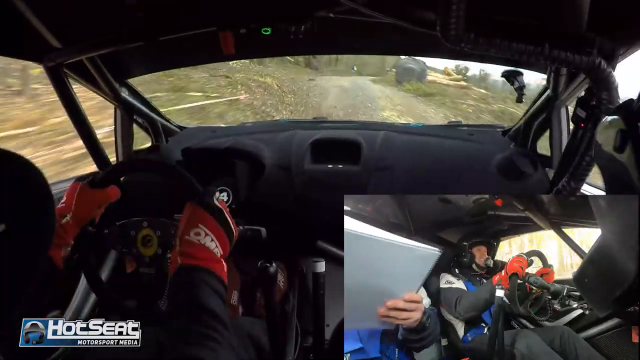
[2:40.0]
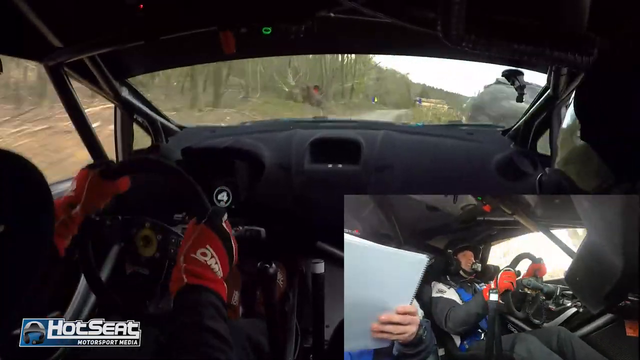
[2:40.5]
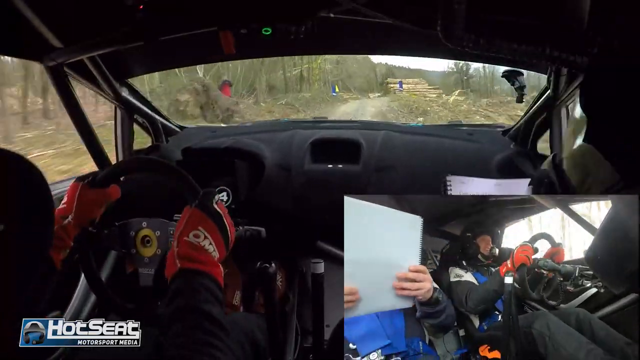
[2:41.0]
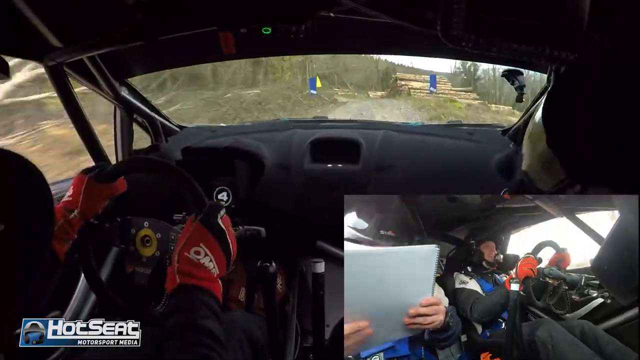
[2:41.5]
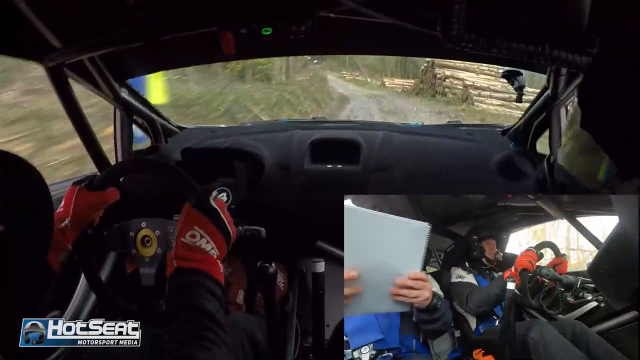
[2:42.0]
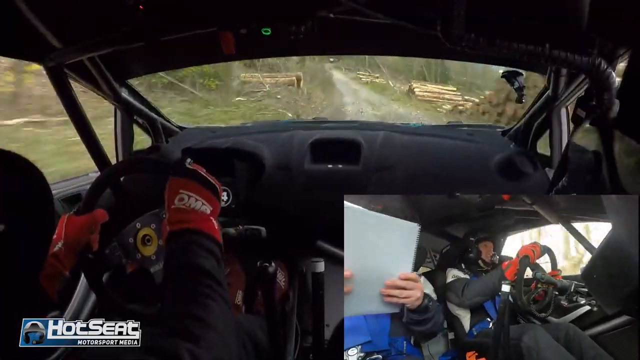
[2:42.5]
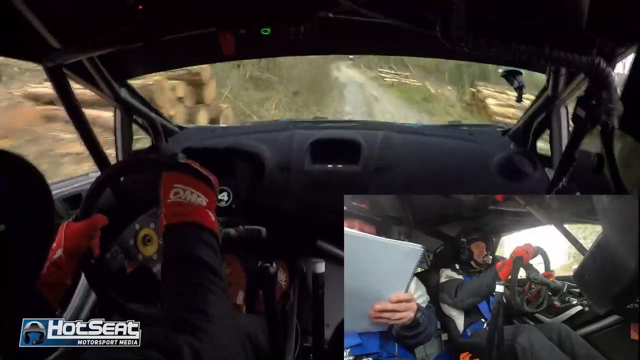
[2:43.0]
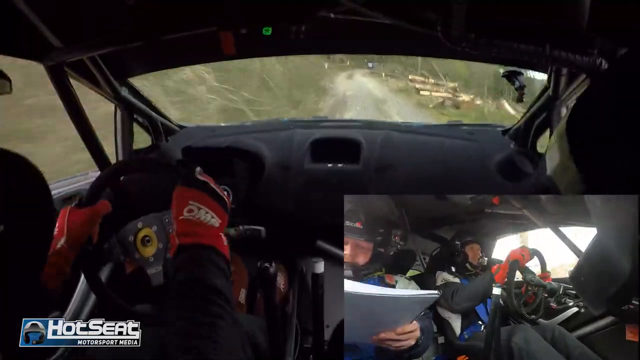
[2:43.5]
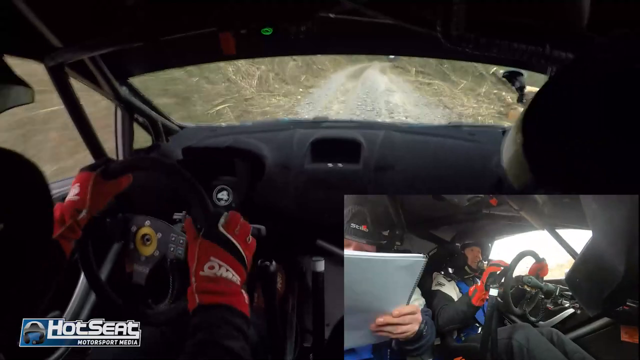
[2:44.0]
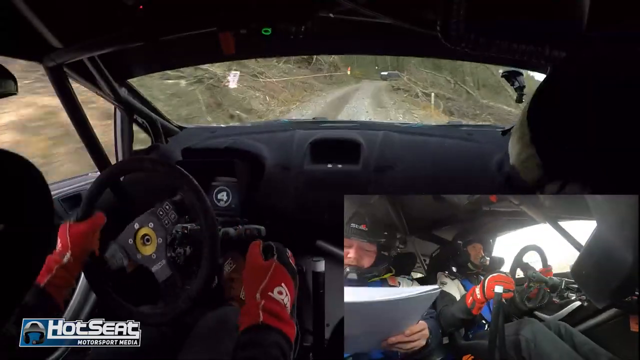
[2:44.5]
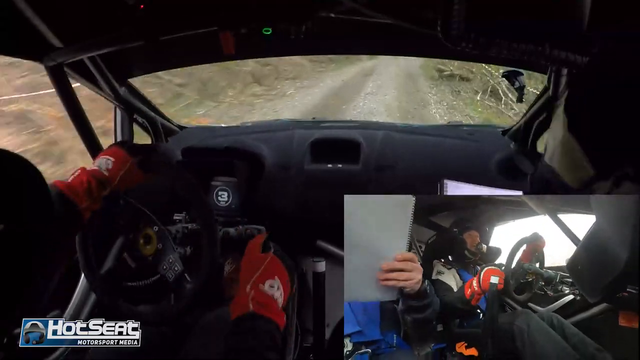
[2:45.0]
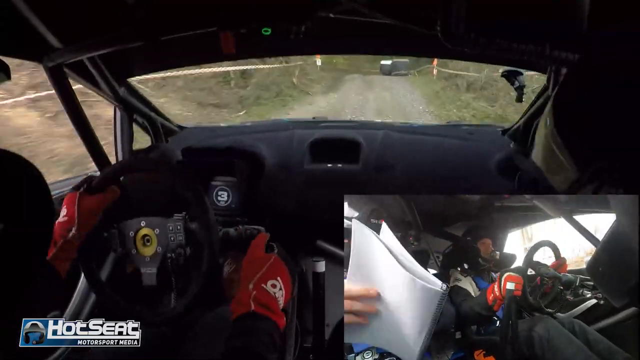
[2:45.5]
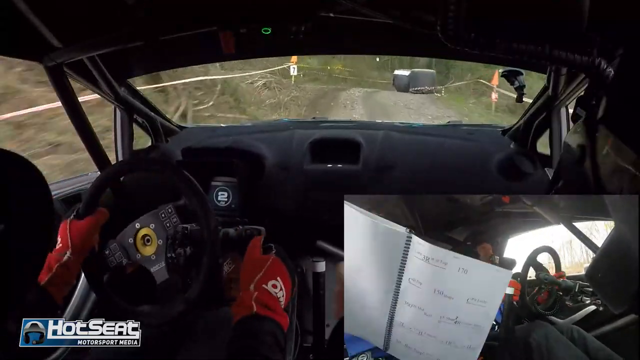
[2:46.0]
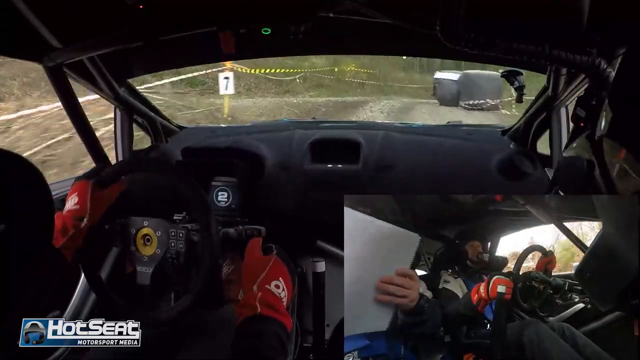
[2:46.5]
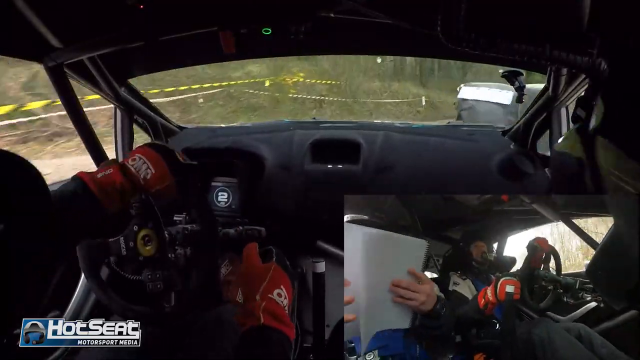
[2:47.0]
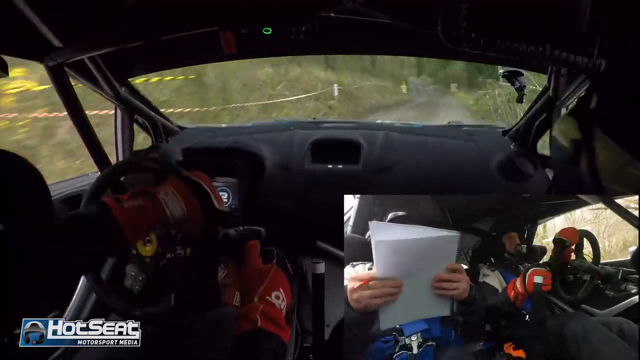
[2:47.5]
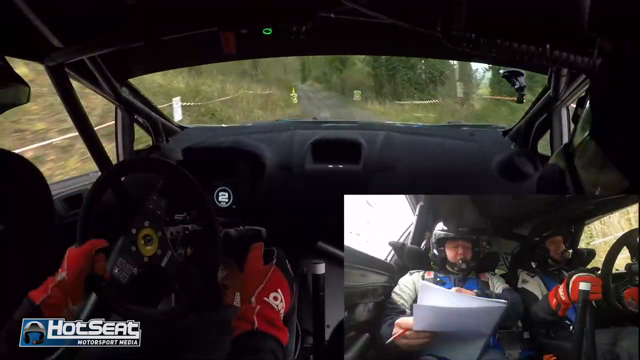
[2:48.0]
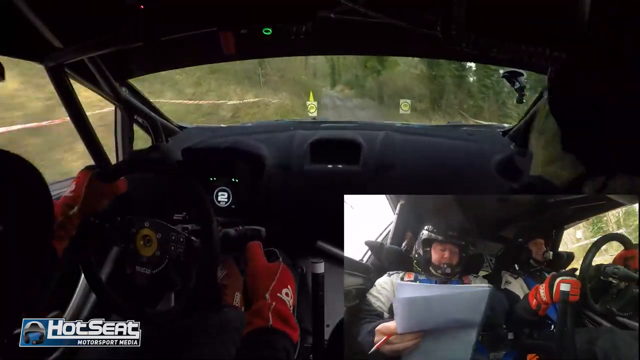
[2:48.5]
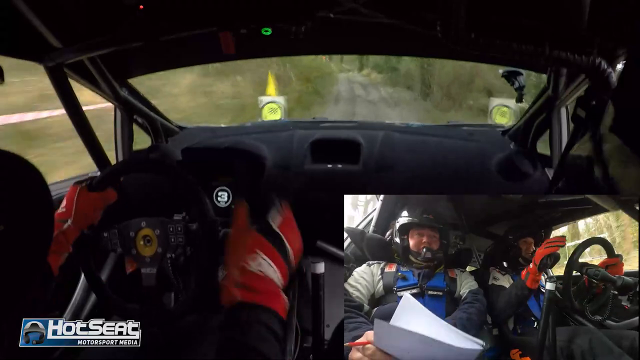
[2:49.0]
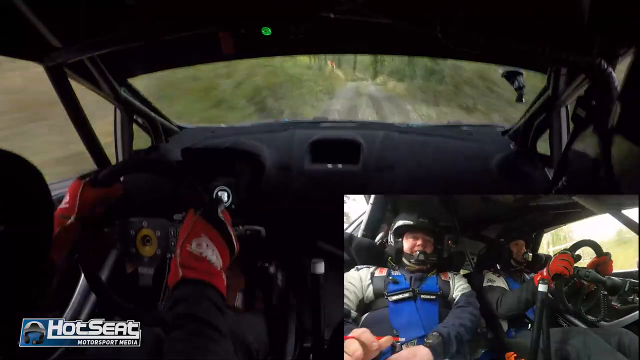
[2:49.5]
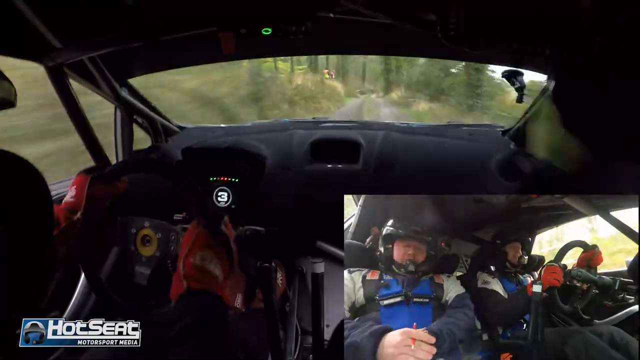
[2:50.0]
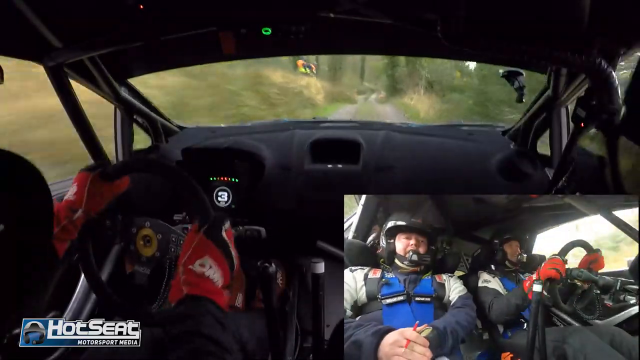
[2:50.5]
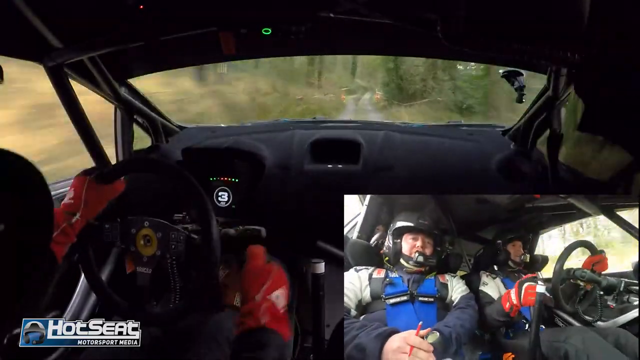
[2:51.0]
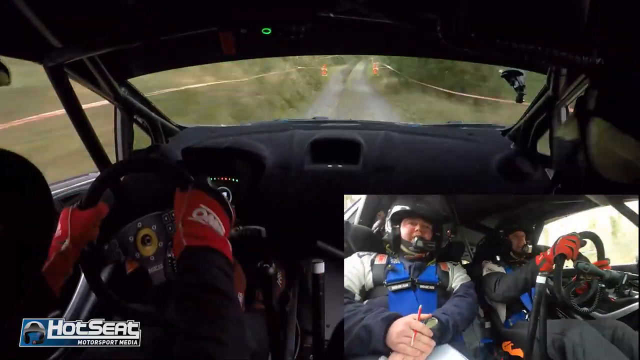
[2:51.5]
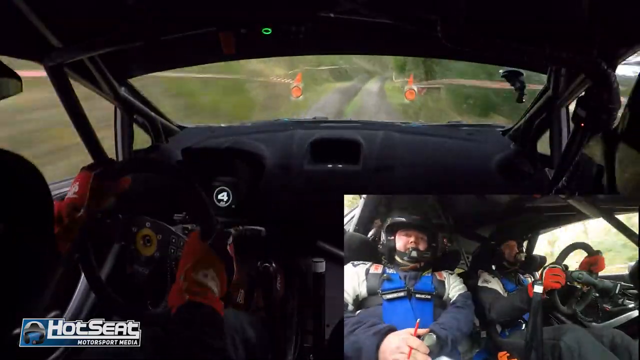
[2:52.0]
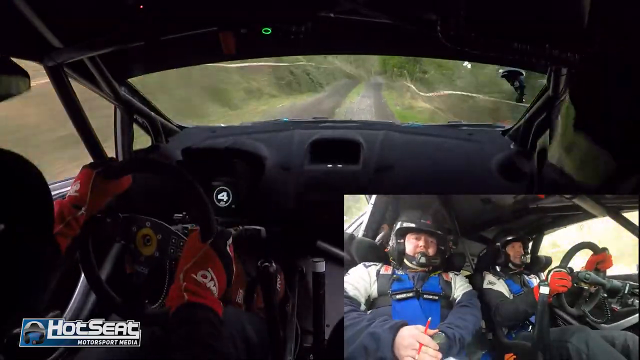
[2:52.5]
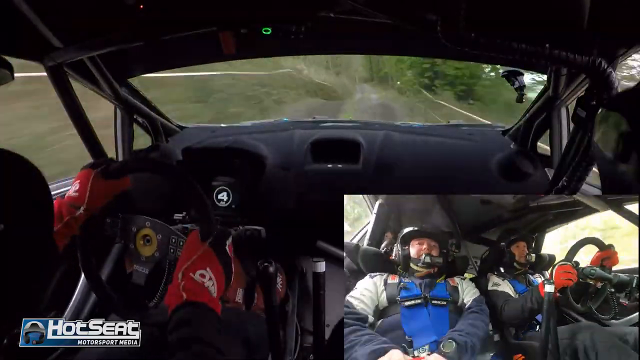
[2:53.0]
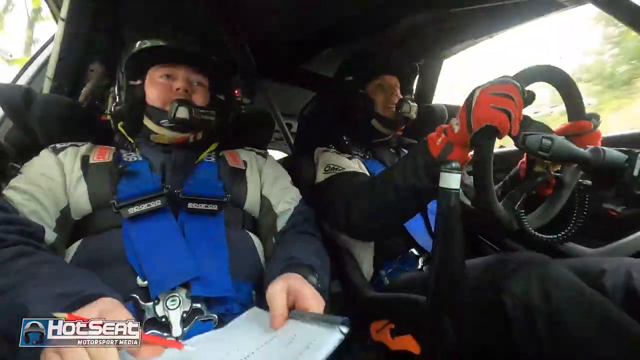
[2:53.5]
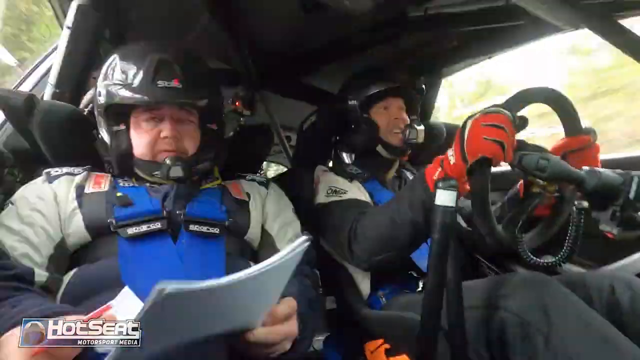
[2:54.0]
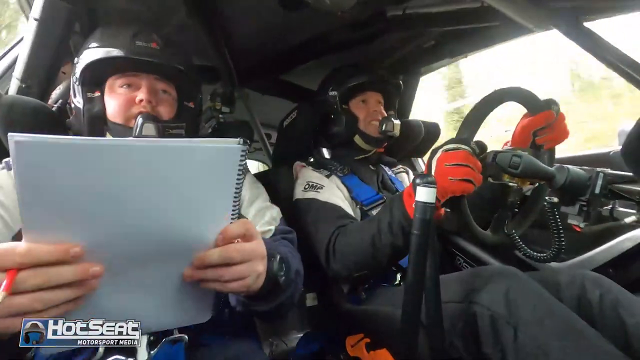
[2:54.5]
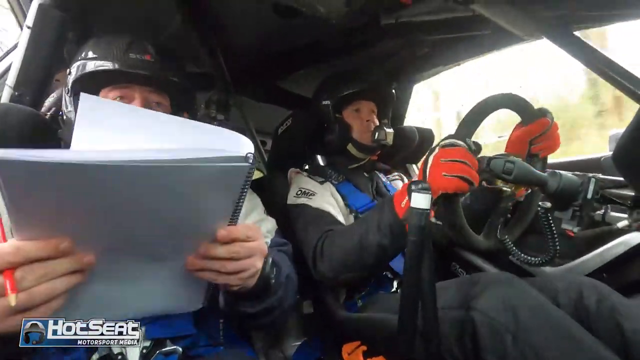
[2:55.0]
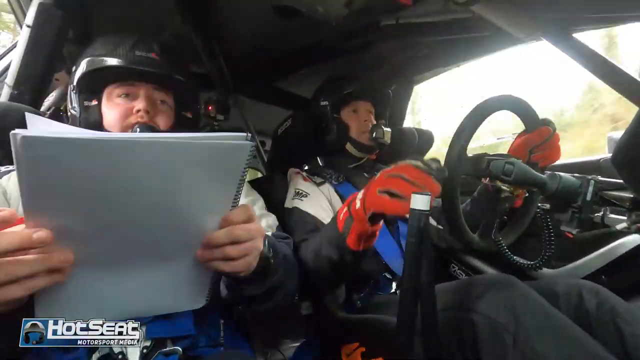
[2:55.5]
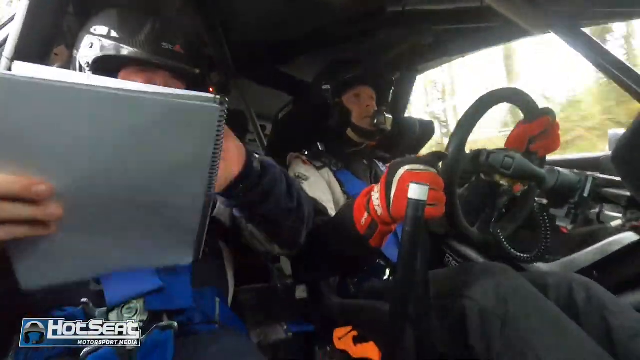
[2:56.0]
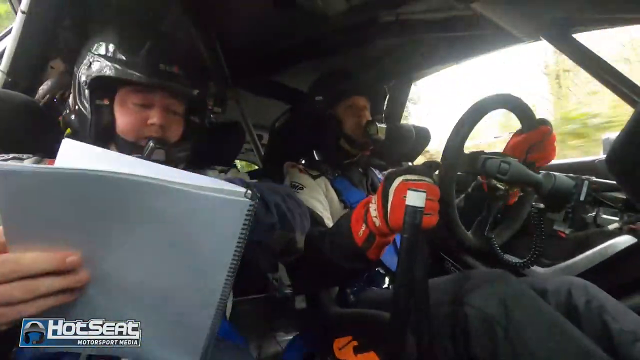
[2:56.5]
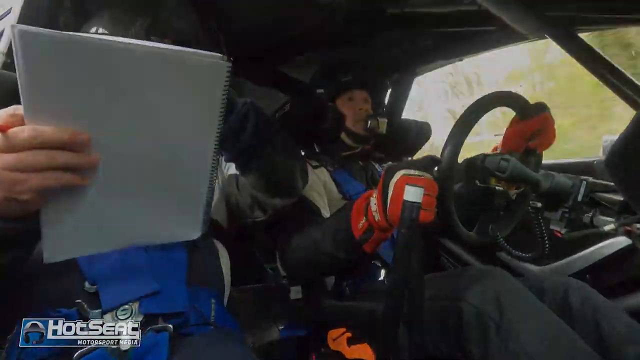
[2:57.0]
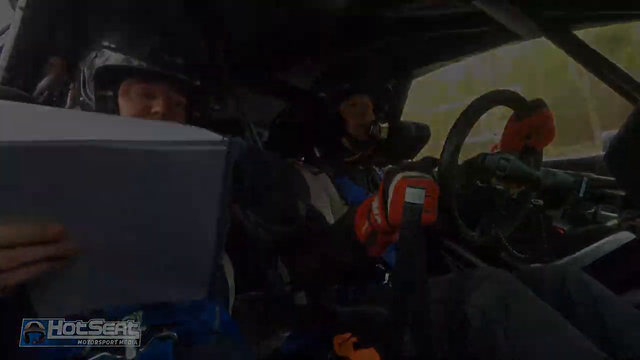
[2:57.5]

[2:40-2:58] The car is in an area that looks more cleared out, with logs and piles at the side. The number goes from 5 to 4 to 3, and the speed seems to be going down. There are big objects in the background, and it looks like a construction site, with people at the side who look like construction workers in jackets. The camera then switches to show only the inside of the car. The man with the papers lowers them, showing more of his face; he appears somewhat chubby, with a reddish complexion. There may be something on his wrist, as he seems to bring it up to his face as if talking into it. The video then switches back to the view of them driving.